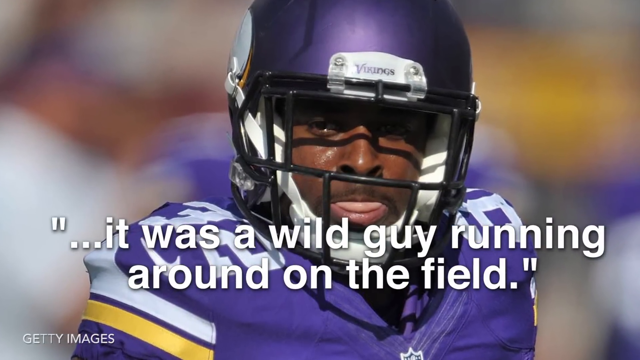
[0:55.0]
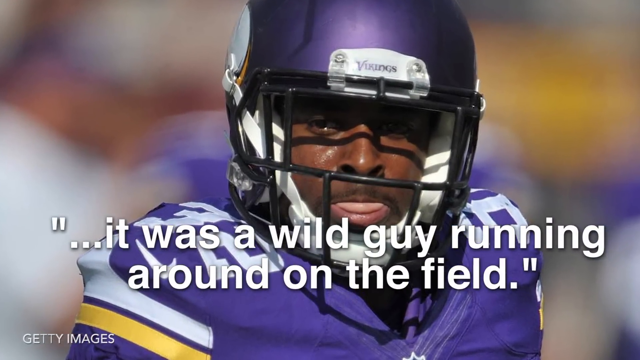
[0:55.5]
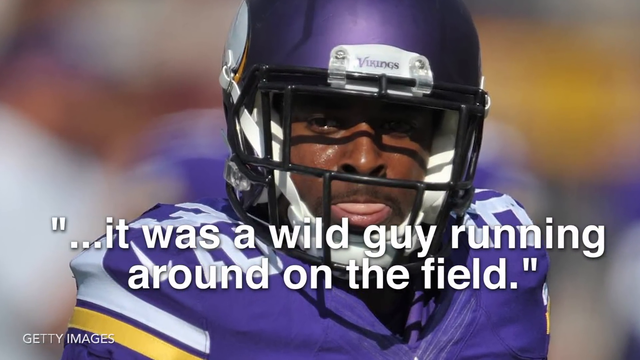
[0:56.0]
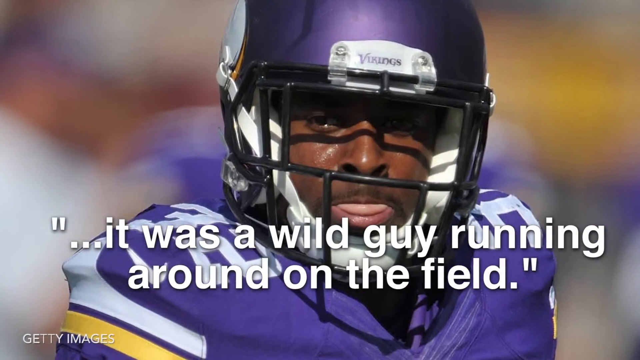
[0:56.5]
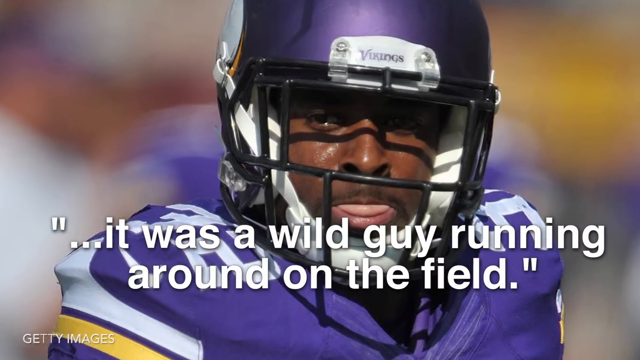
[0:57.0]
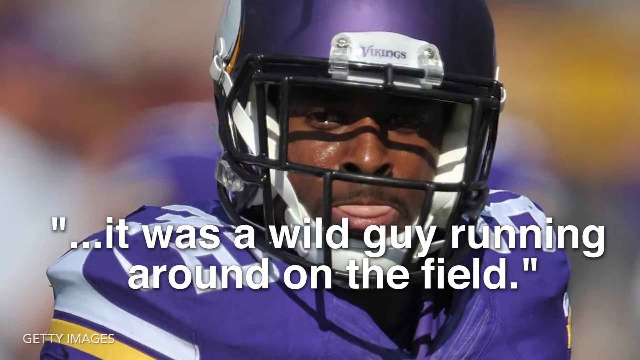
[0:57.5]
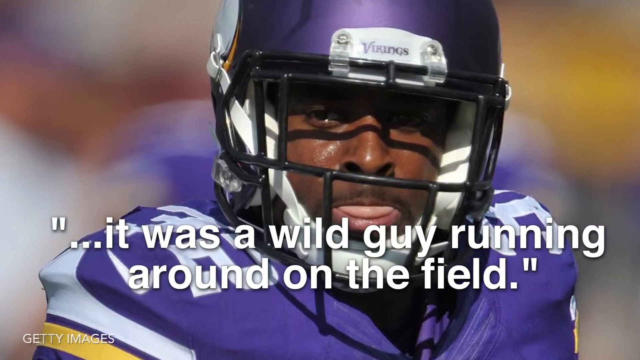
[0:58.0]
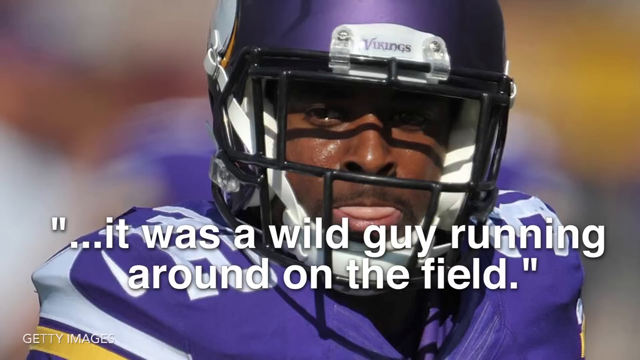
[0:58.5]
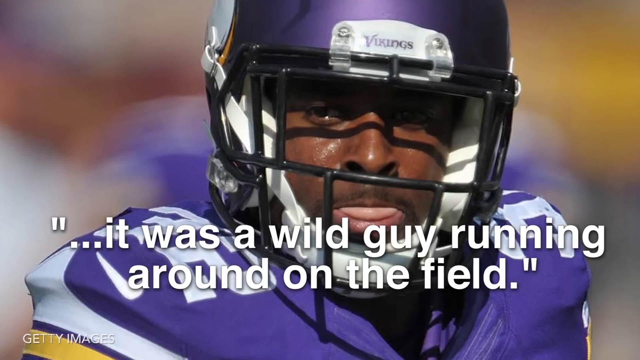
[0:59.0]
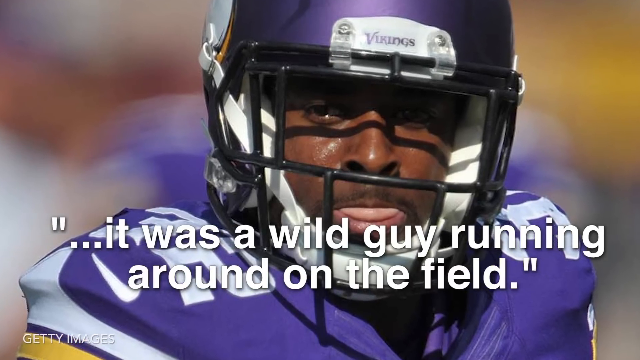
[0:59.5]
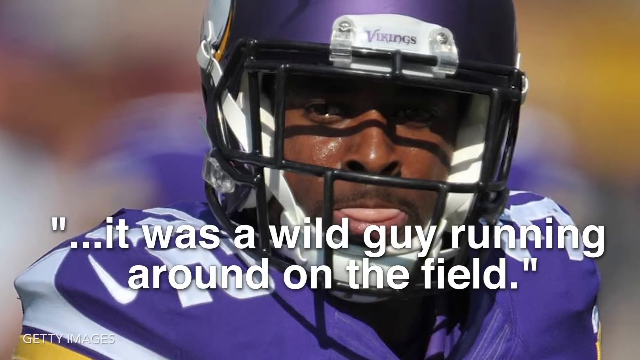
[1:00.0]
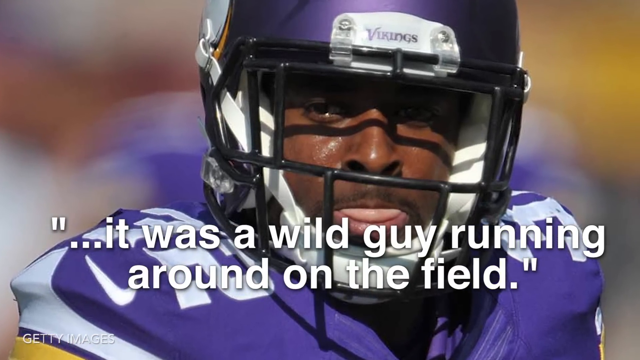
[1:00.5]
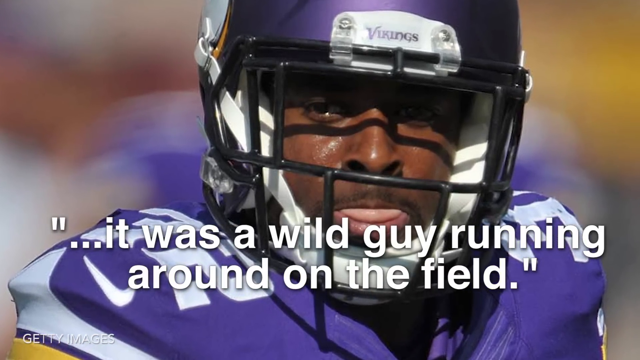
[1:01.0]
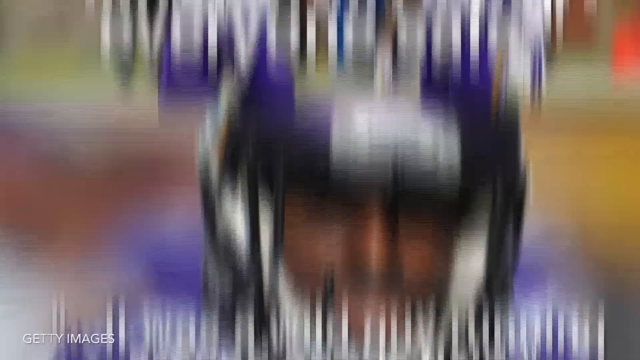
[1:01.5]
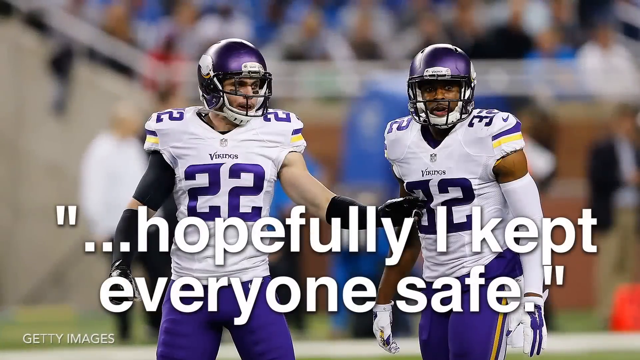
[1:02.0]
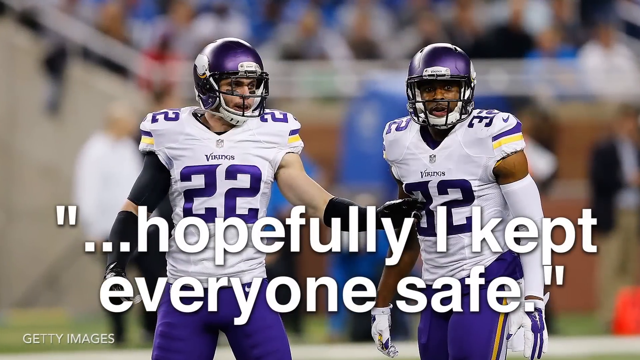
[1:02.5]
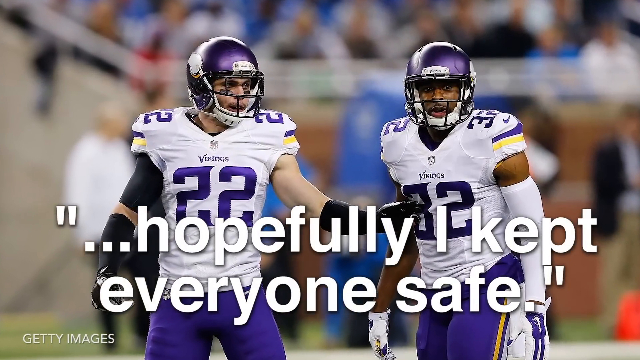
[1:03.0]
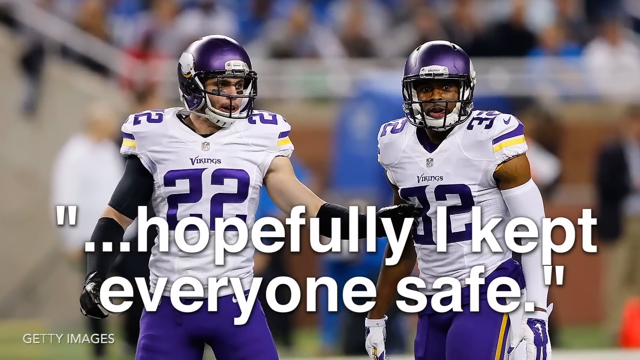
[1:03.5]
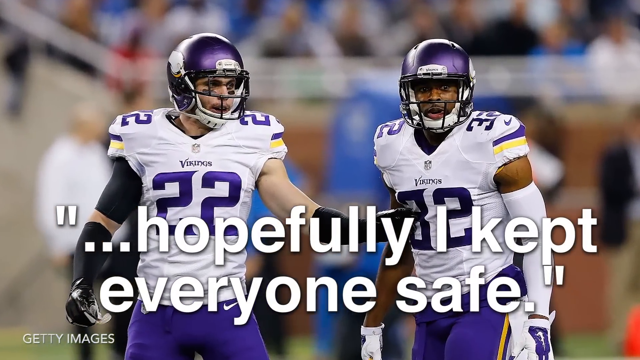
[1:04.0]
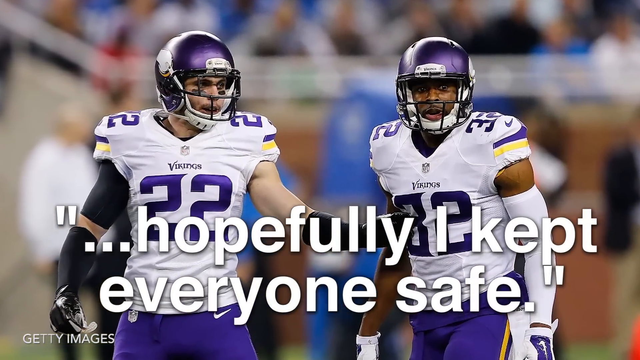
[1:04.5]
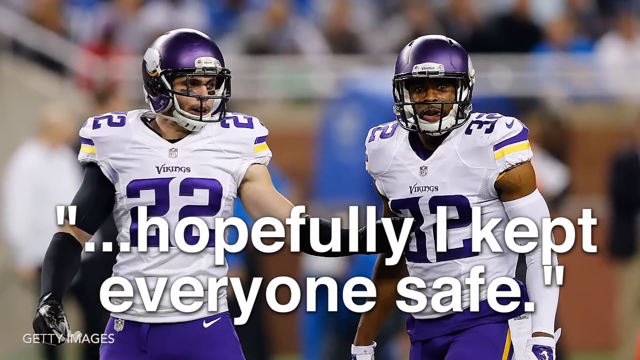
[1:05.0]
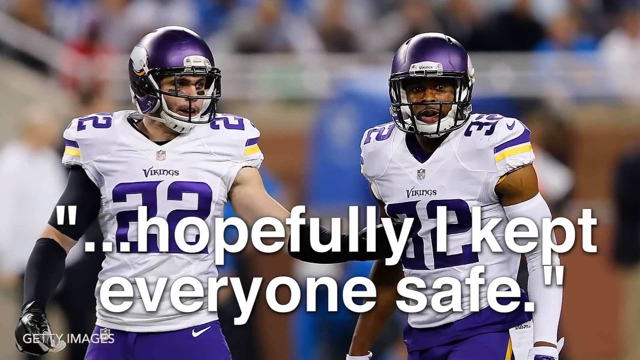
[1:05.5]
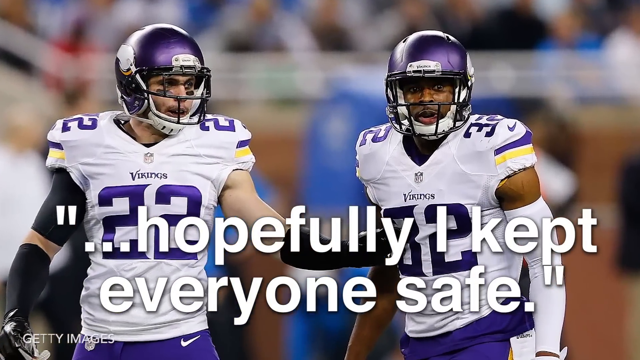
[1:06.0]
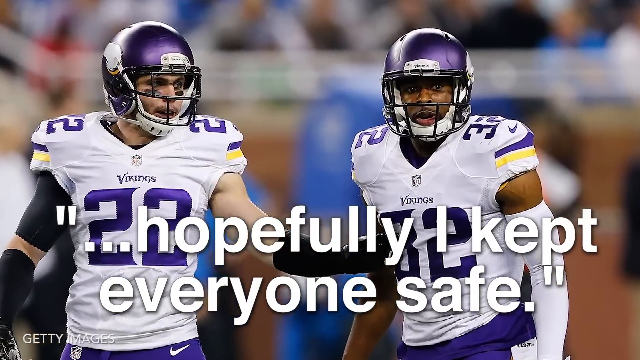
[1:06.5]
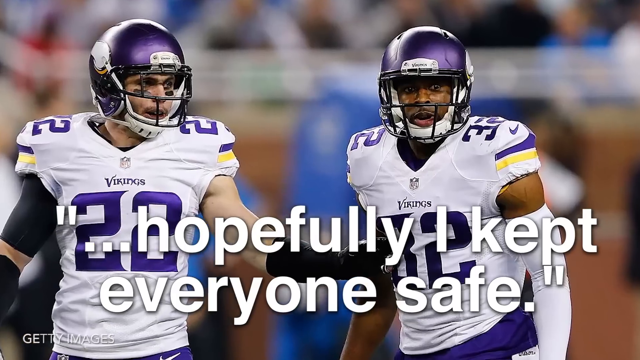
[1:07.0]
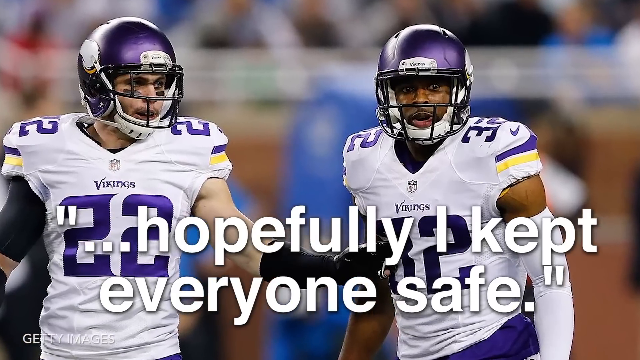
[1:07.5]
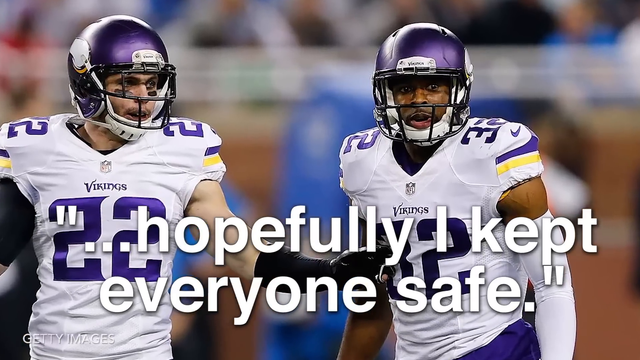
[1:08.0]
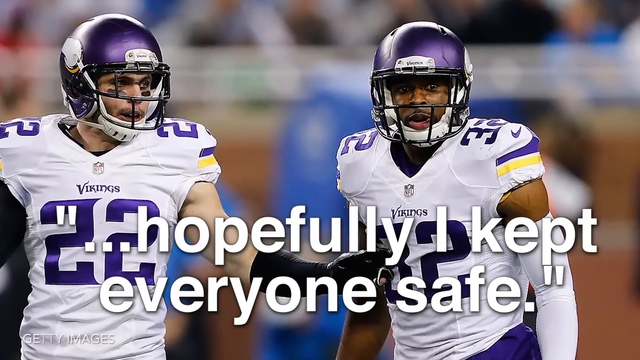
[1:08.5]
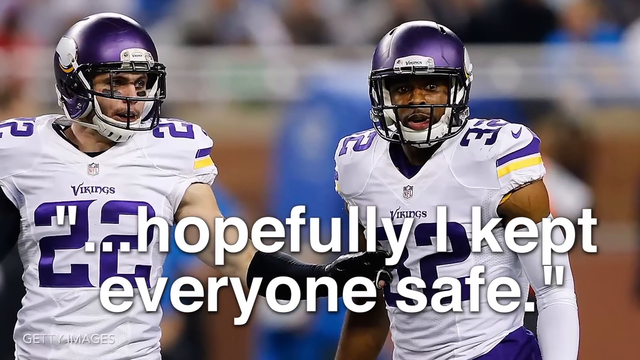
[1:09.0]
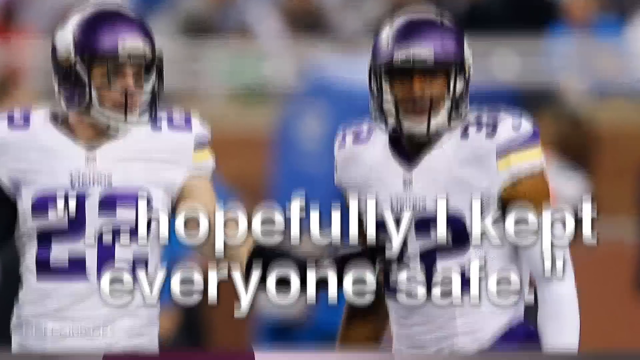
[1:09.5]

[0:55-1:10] A still close-up image shows the face of the Vikings' number 32, an African-American man in a purple helmet and purple jersey, with his tongue sticking out. A quote beneath his head reads "it was a wild guy running around on the field." Next is a still shot of the same player standing on the field with teammate number 22, a Caucasian man who is kind of holding his chest, with the quote "hopefully I kept everyone safe" beneath them and a slow zoom in on the image. The scene quickly changes back to the split screen: the female news reporter, with olive skin and dark hair and wearing a purple shirt, is talking, and the number 32 player is on the right. In this picture he wears a white jersey with purple sleeves and a purple 32, has his purple helmet off, and holds his gloves.